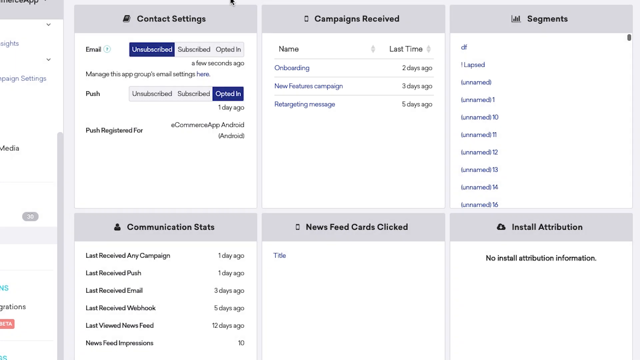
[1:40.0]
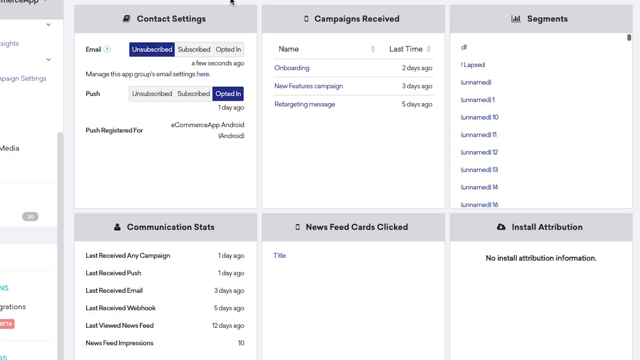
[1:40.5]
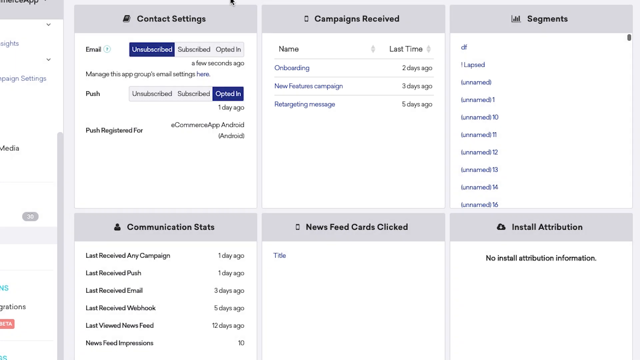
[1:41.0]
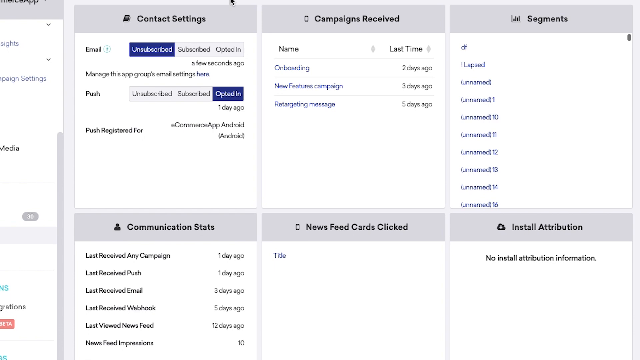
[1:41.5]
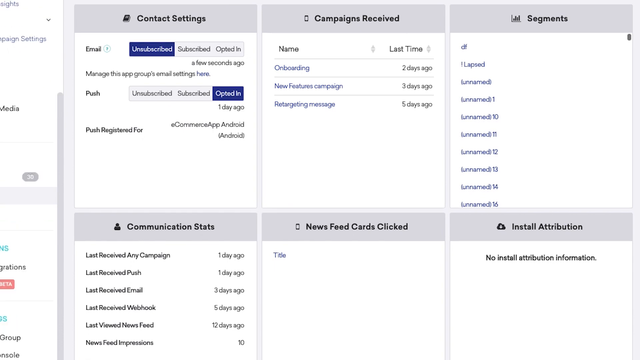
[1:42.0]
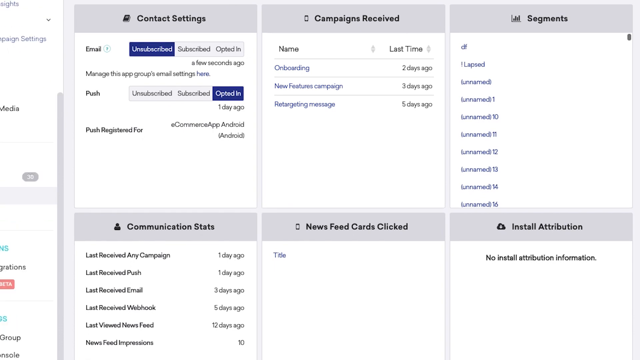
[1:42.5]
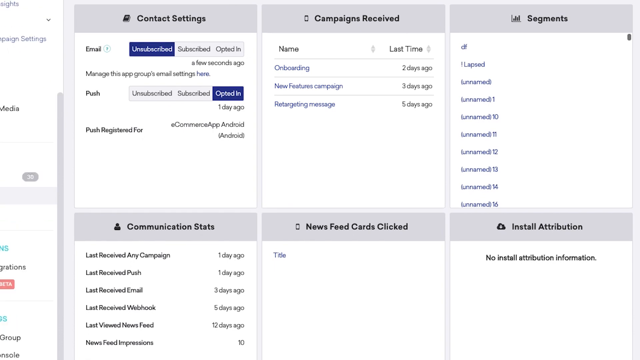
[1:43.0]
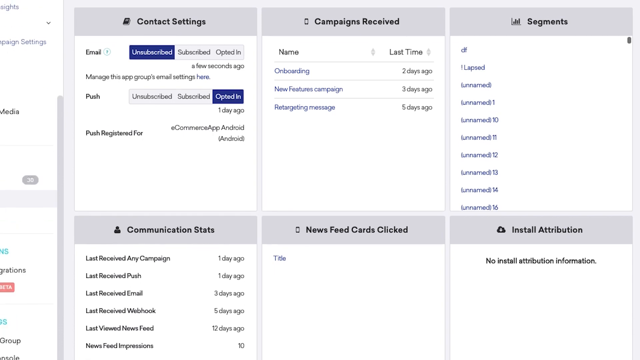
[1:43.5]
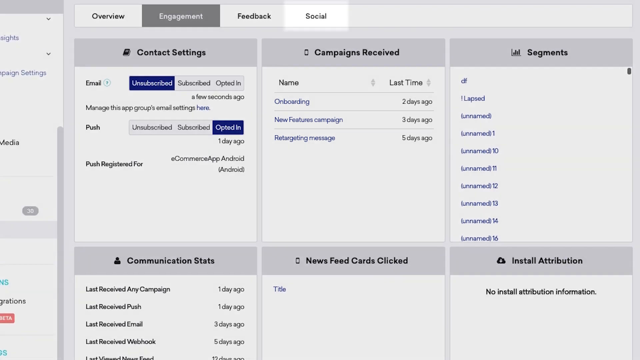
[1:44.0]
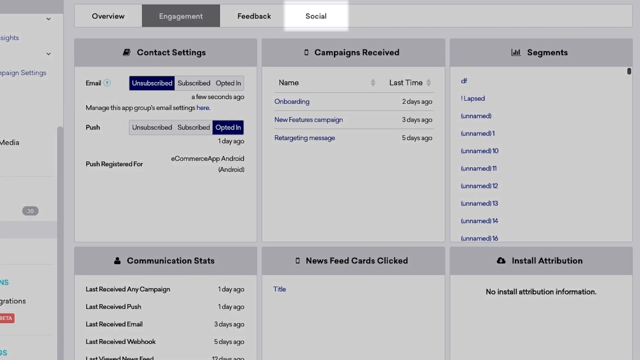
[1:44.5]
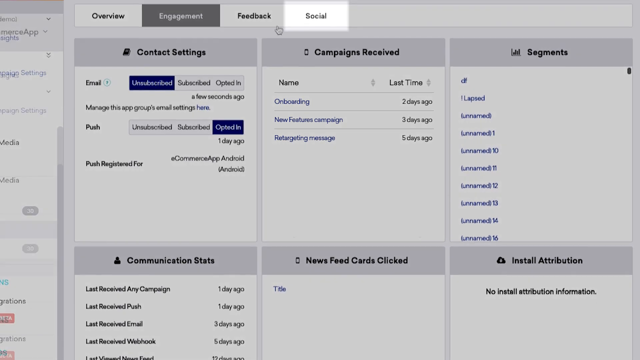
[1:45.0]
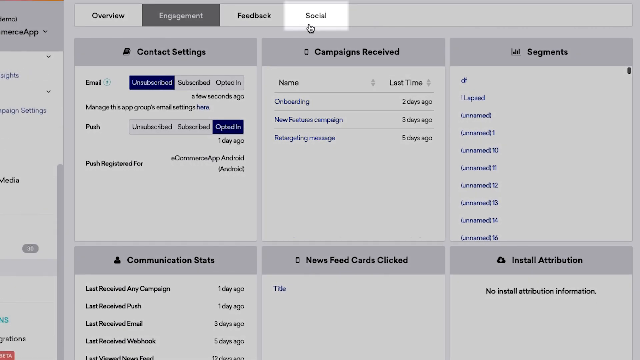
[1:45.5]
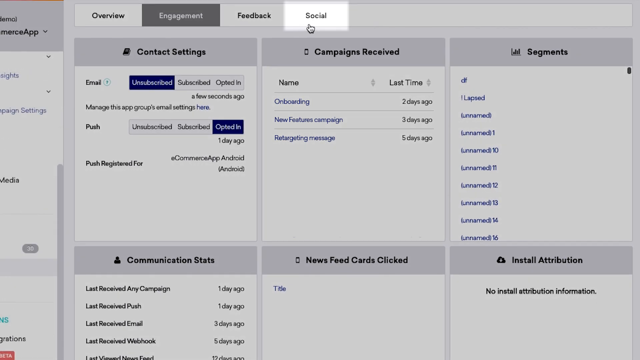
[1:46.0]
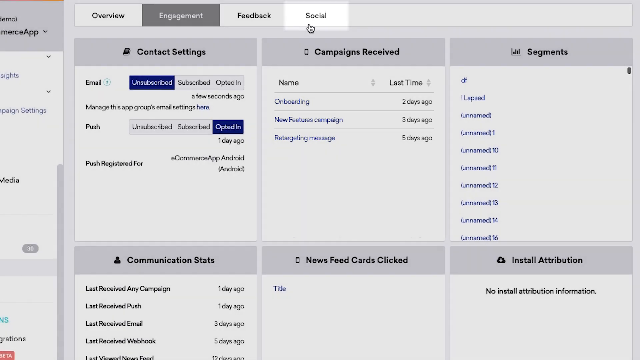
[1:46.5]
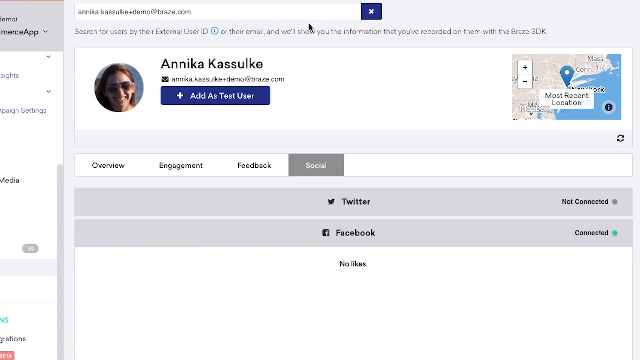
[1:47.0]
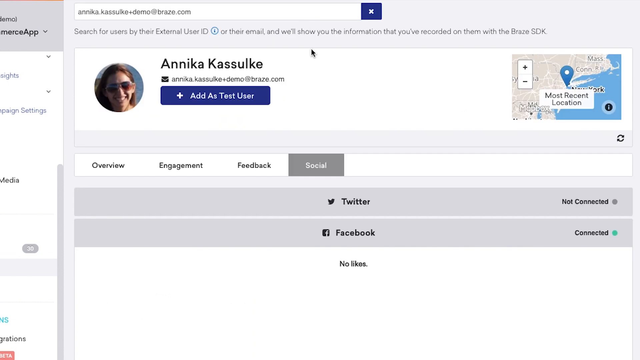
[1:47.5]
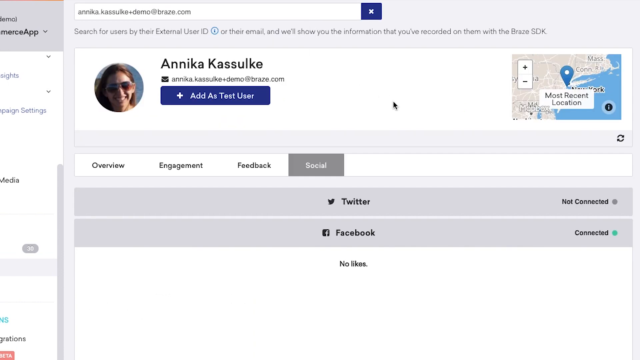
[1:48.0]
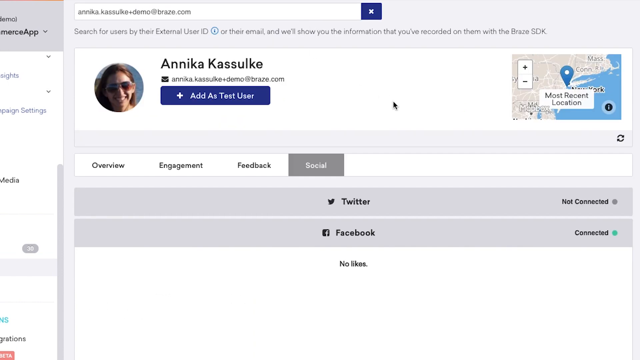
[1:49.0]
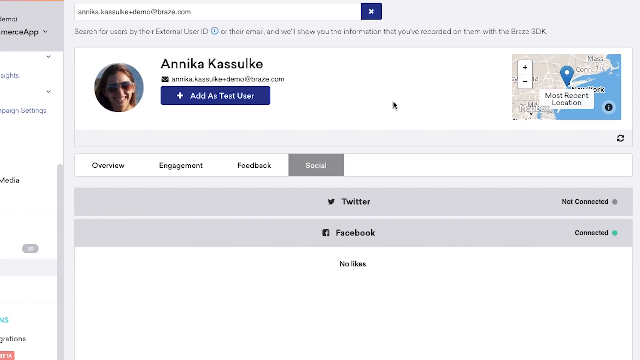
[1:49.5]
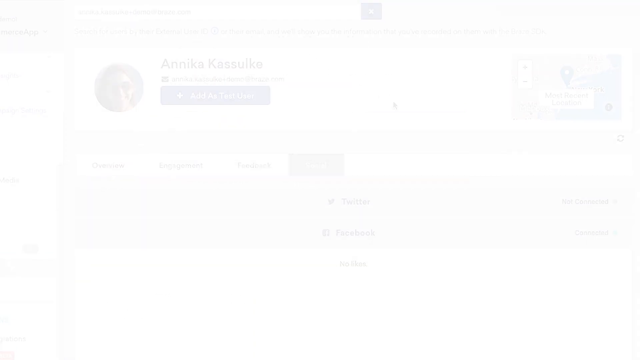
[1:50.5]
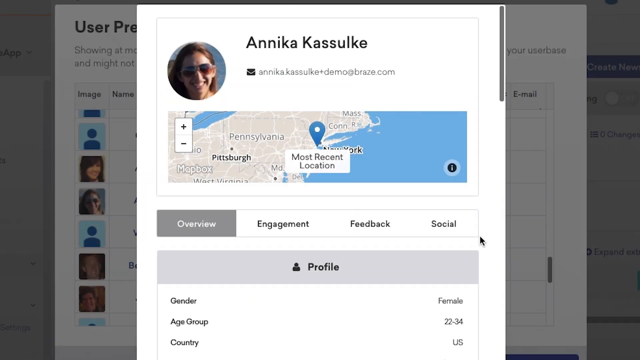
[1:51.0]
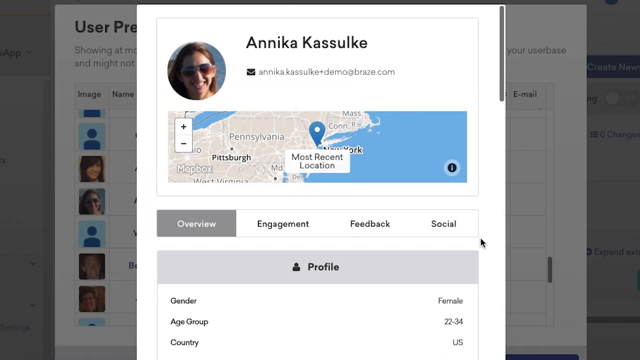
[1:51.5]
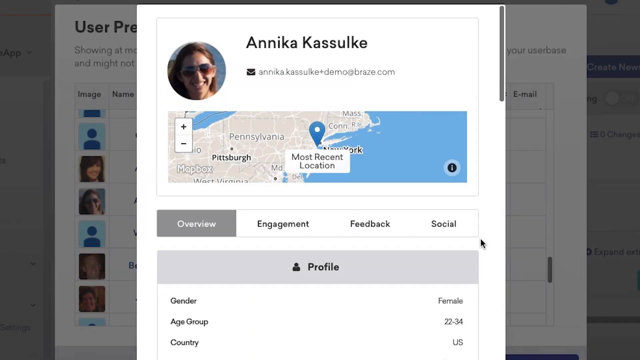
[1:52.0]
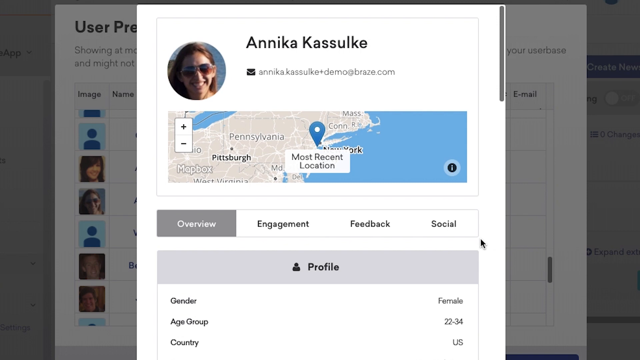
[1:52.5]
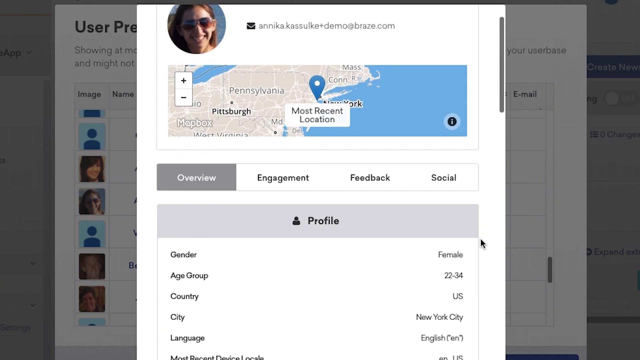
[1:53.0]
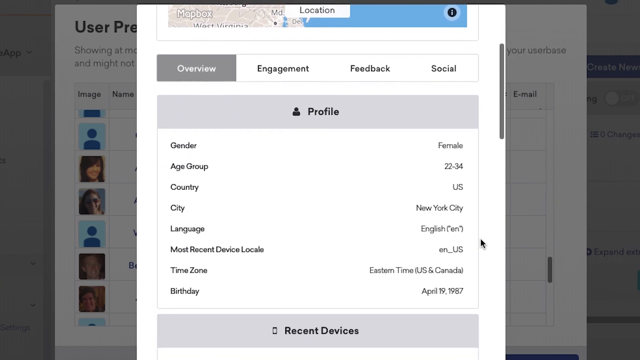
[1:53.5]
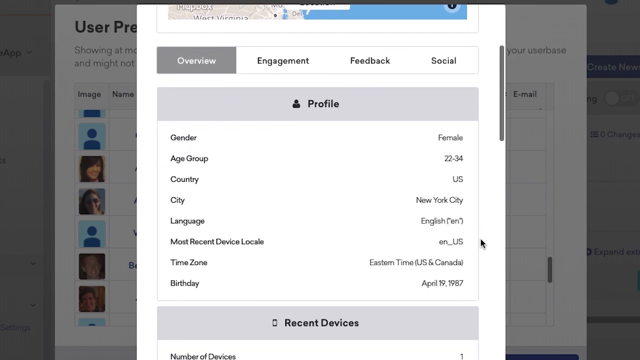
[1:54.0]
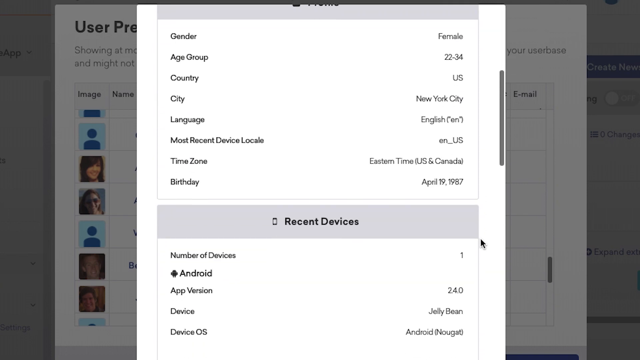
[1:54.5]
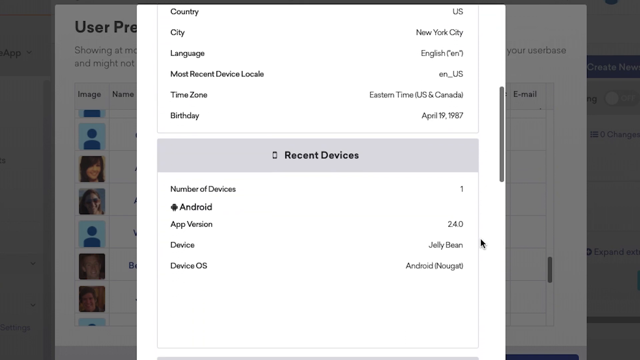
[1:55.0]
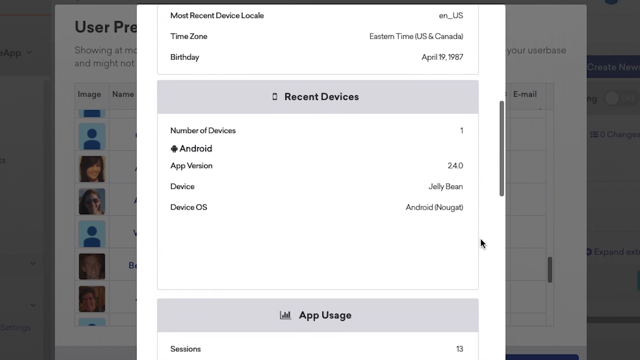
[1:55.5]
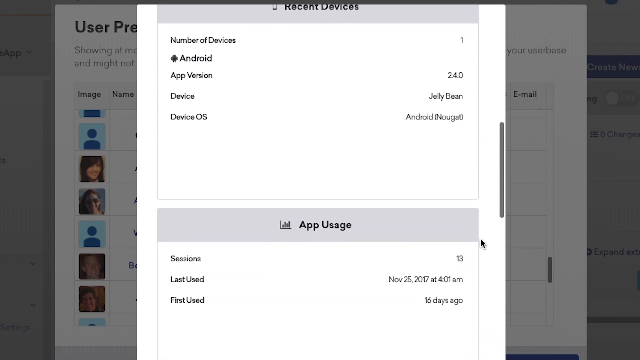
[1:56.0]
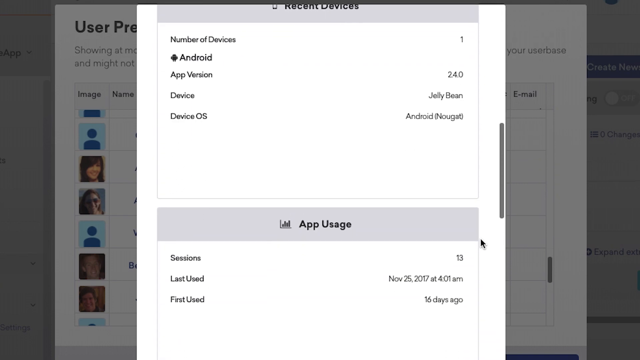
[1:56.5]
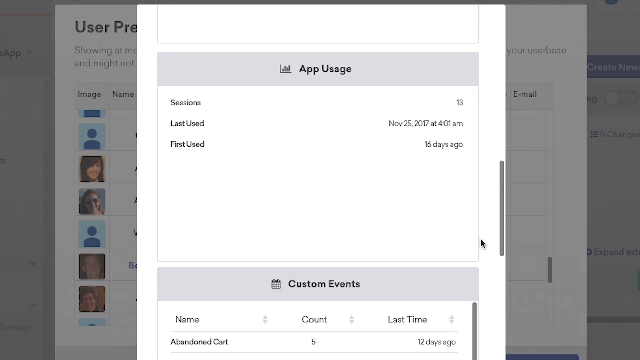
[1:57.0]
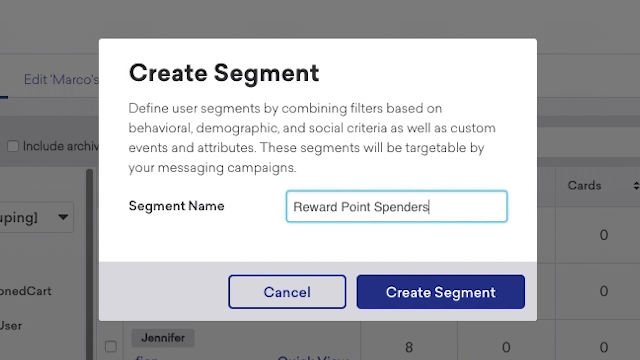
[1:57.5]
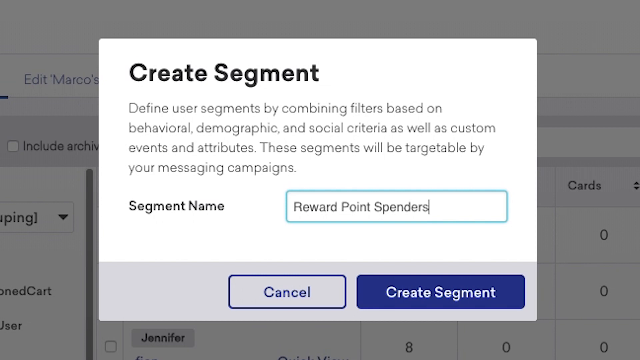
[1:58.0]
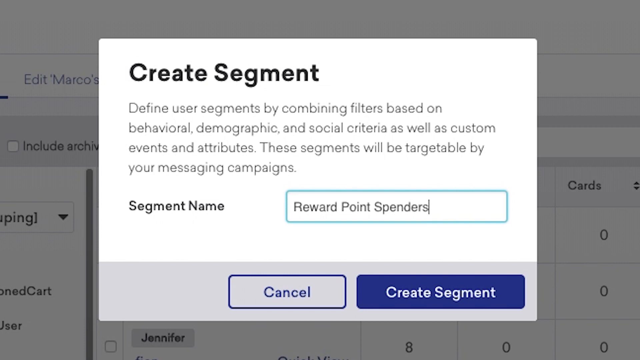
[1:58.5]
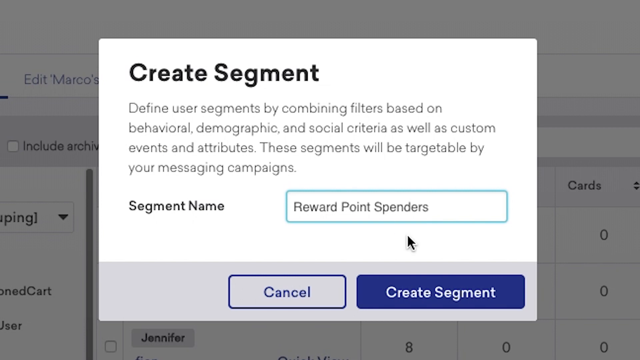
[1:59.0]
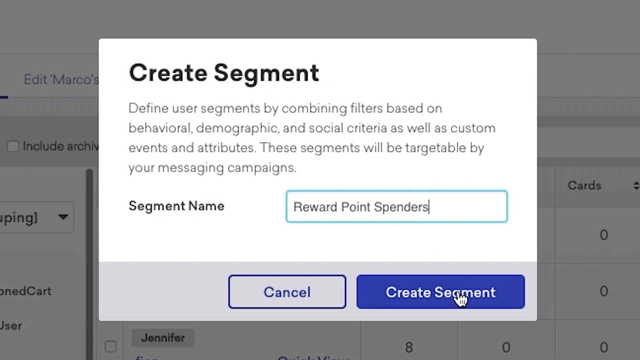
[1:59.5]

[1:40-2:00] A page in the Braze app shows a menu on the left with a slider on a white background, and six separate boxes with buttons, three on top and three on the right. The mouse opens "social," showing the name Annika Kassulke. Beneath her name is information such as Twitter, with "not connected" to the right, and Facebook with the Facebook icon or logo, shown as currently connected. The mouse moves around, then clicks on Annika and shows her most recent location in Arizona. Another pop-up is then clicked open, reading "segment name," with "create segment" on a blue button in the lower right corner of the pop-up.